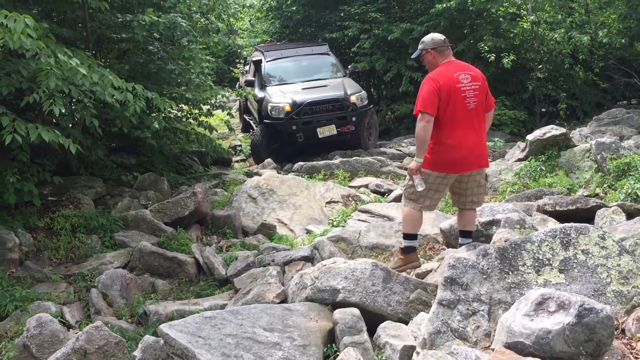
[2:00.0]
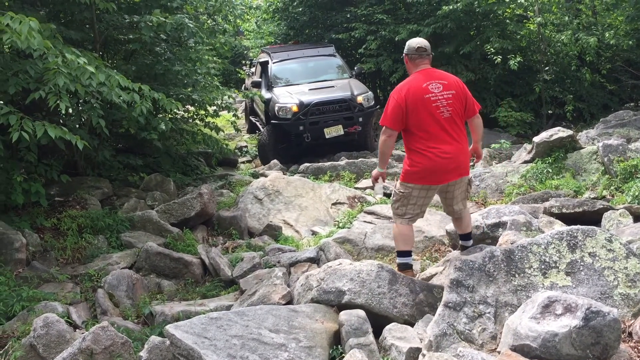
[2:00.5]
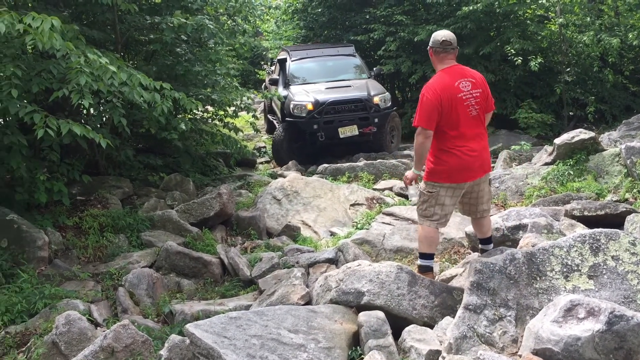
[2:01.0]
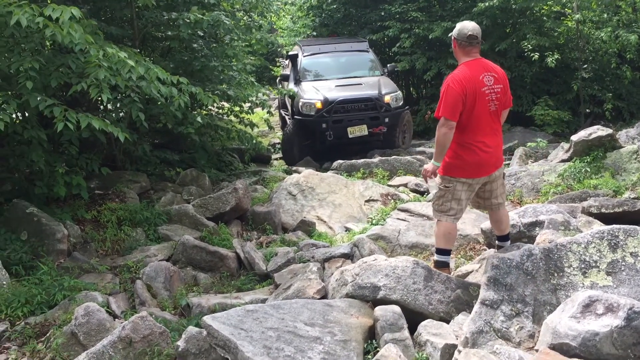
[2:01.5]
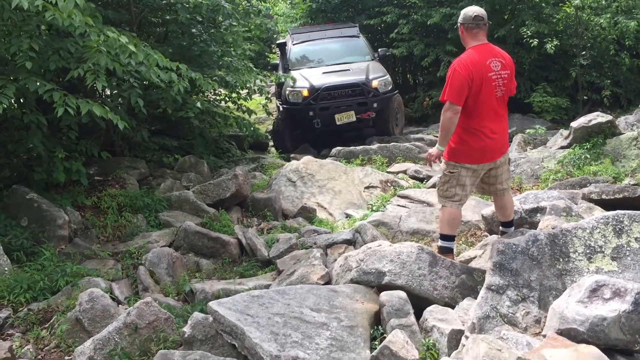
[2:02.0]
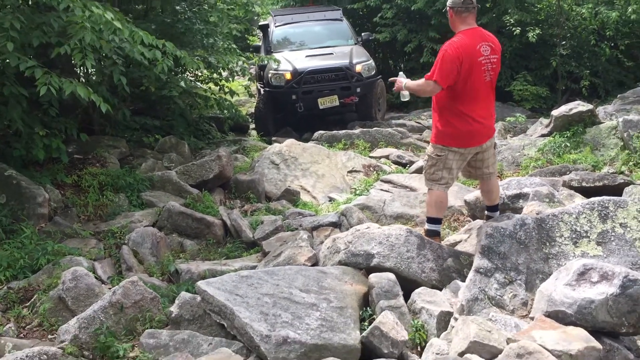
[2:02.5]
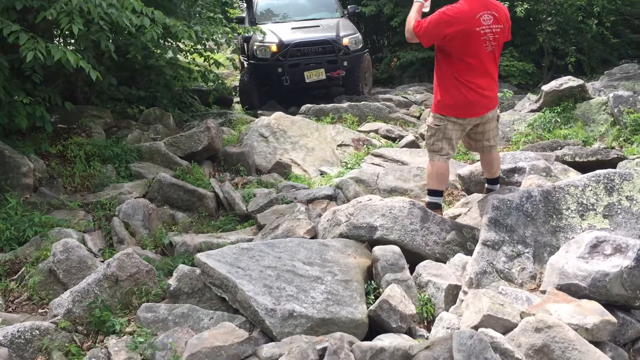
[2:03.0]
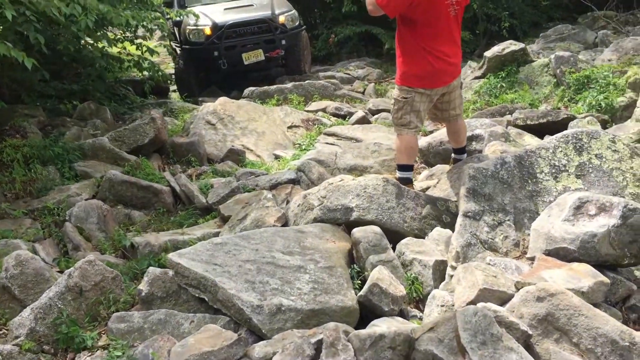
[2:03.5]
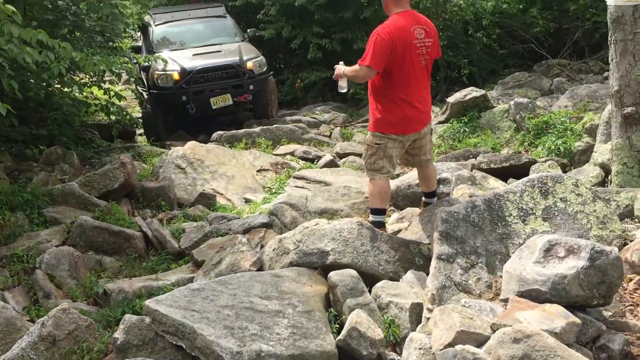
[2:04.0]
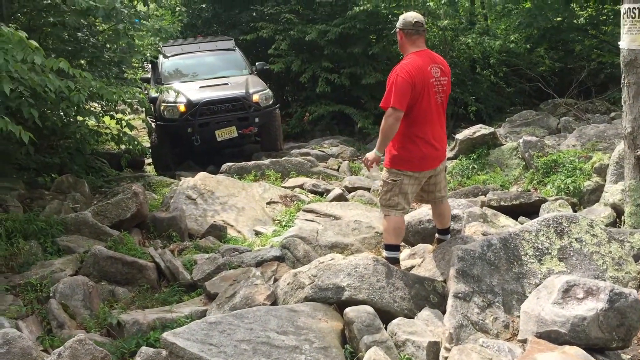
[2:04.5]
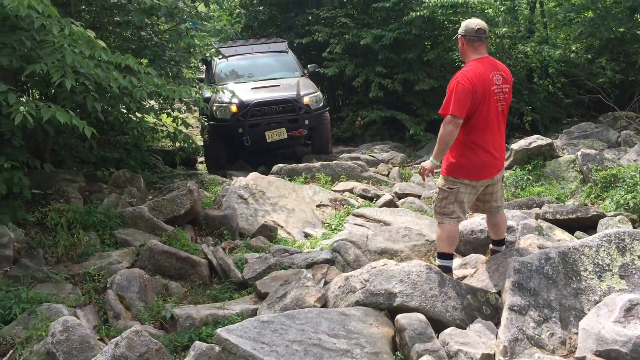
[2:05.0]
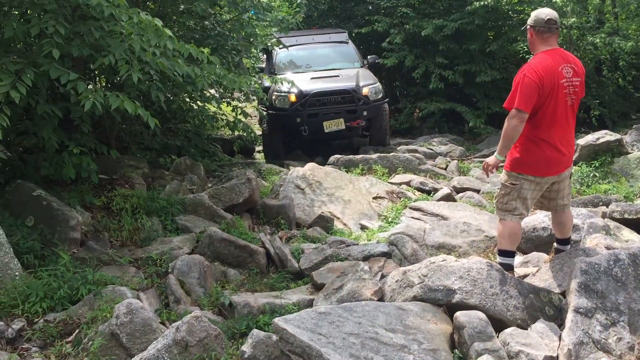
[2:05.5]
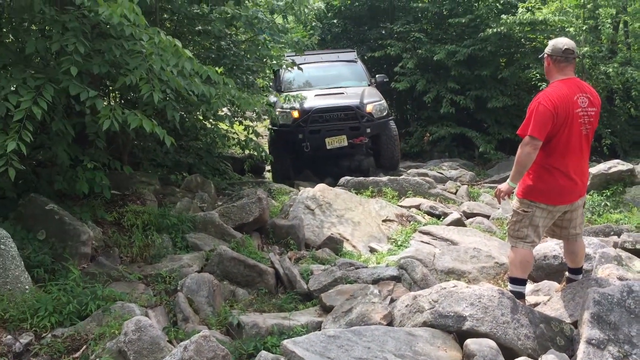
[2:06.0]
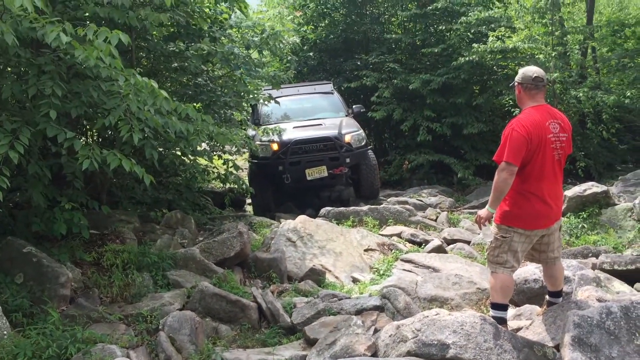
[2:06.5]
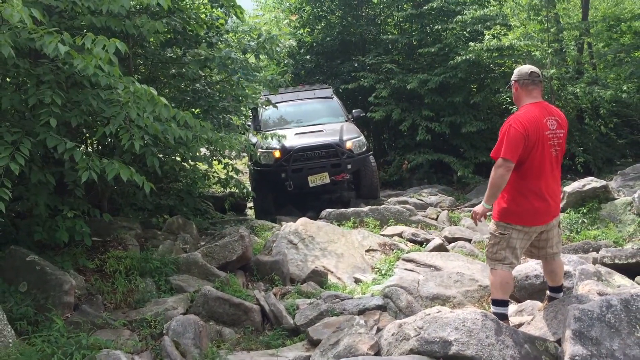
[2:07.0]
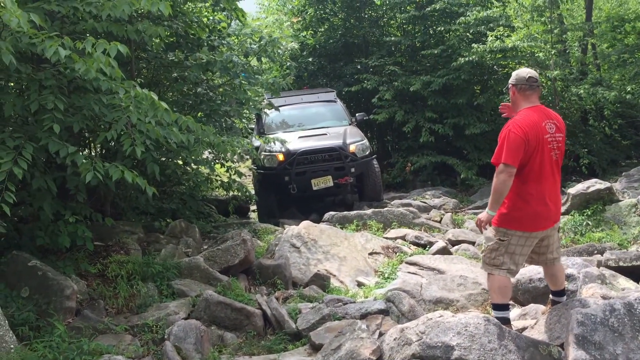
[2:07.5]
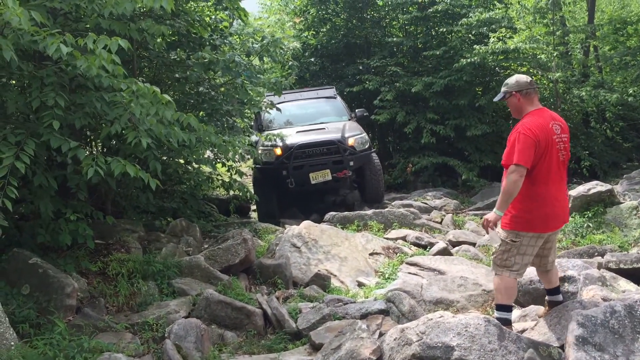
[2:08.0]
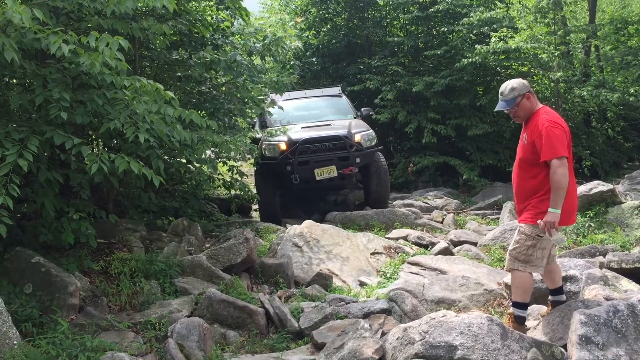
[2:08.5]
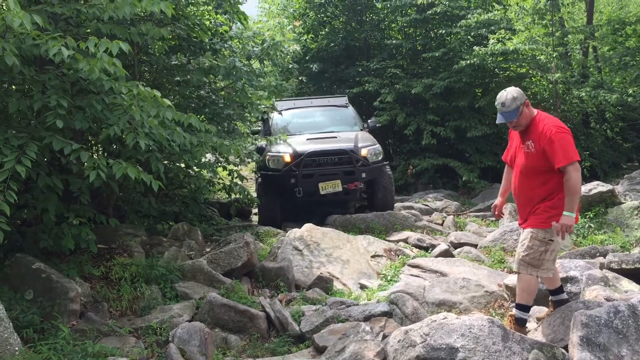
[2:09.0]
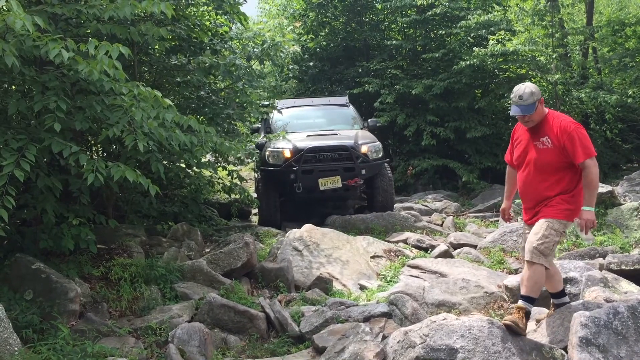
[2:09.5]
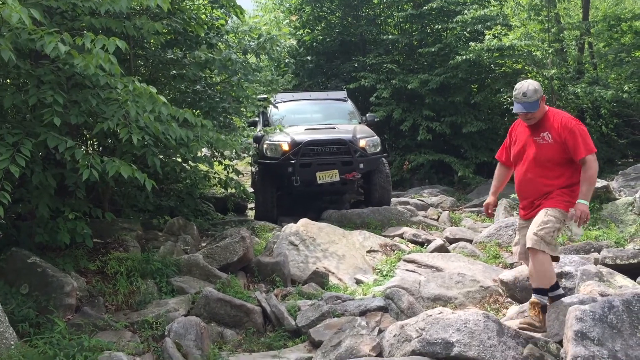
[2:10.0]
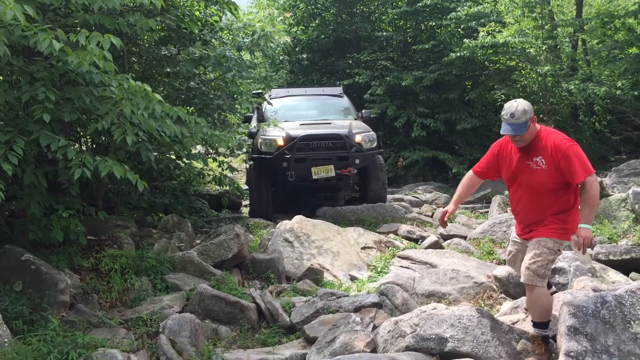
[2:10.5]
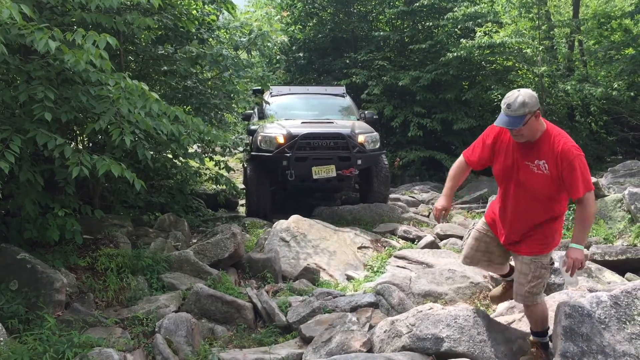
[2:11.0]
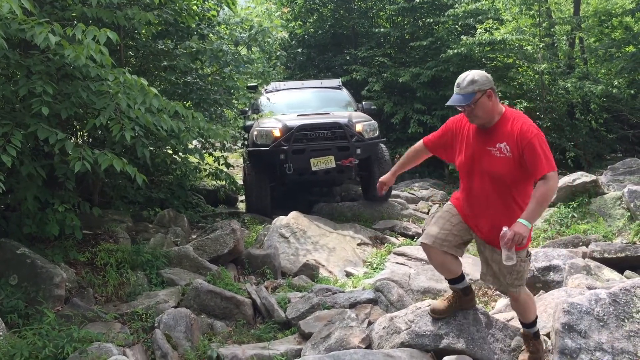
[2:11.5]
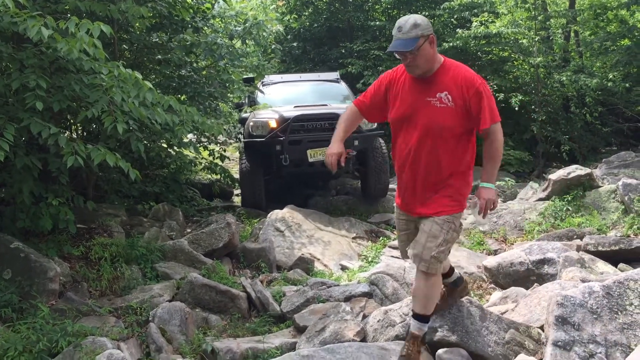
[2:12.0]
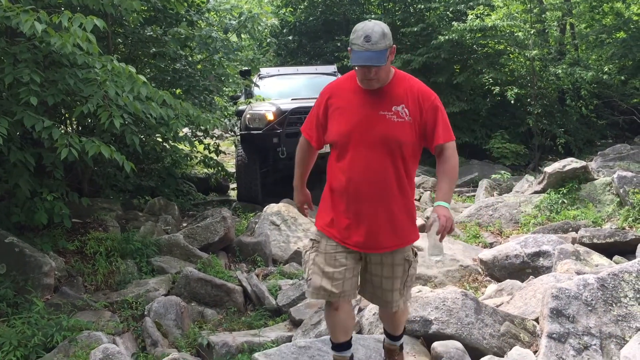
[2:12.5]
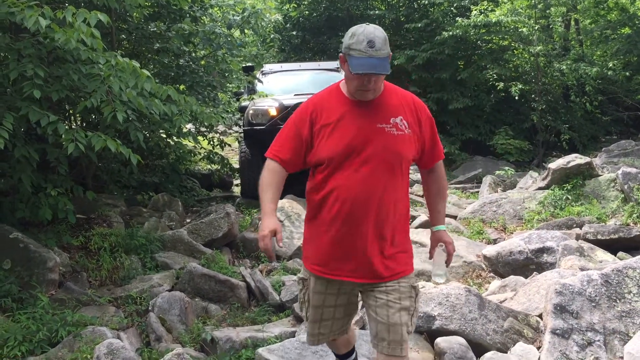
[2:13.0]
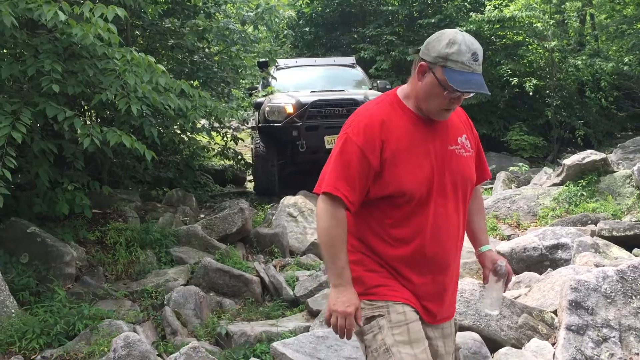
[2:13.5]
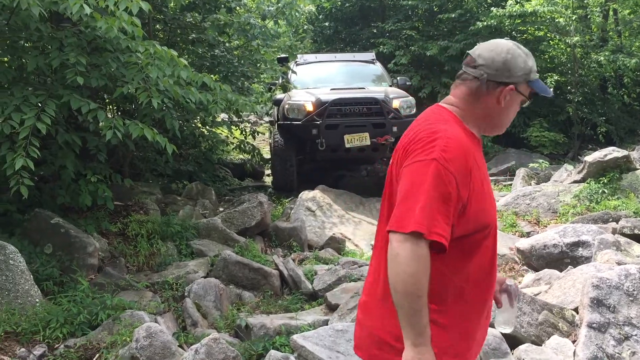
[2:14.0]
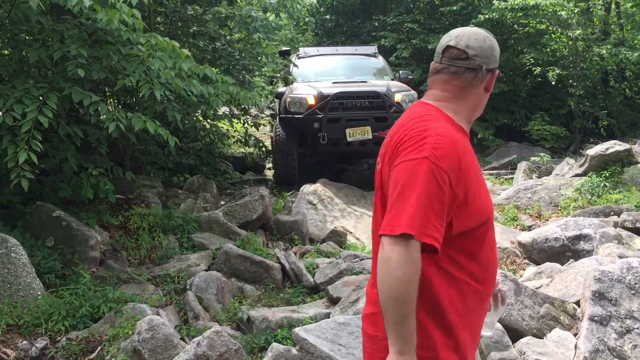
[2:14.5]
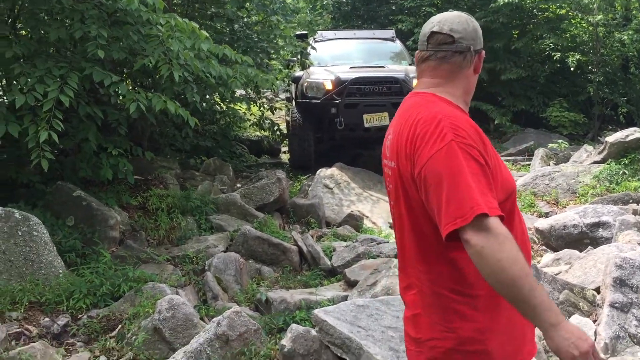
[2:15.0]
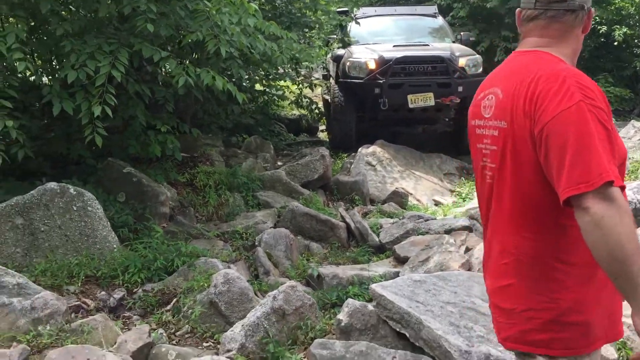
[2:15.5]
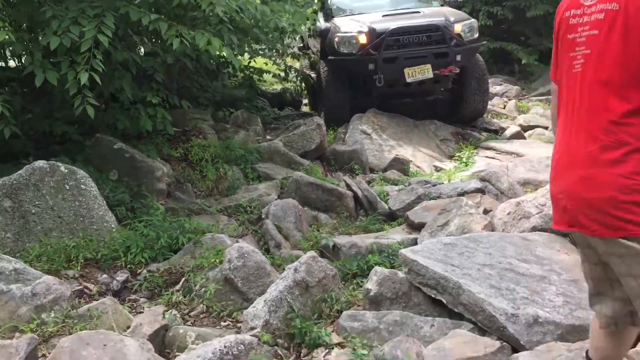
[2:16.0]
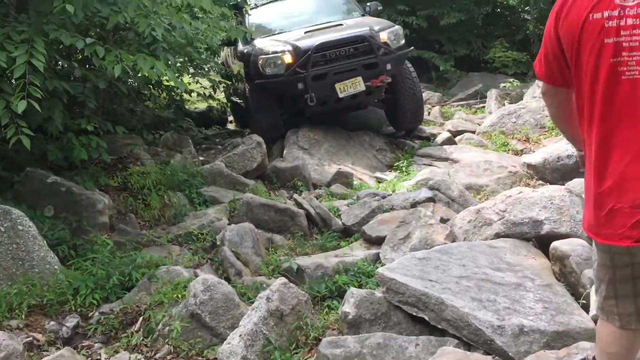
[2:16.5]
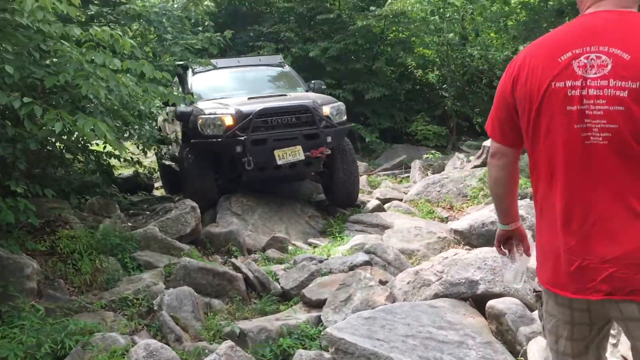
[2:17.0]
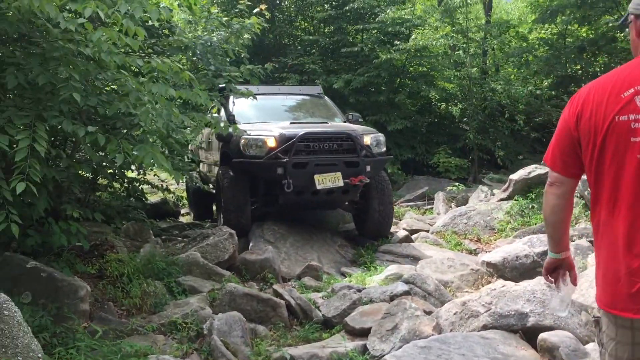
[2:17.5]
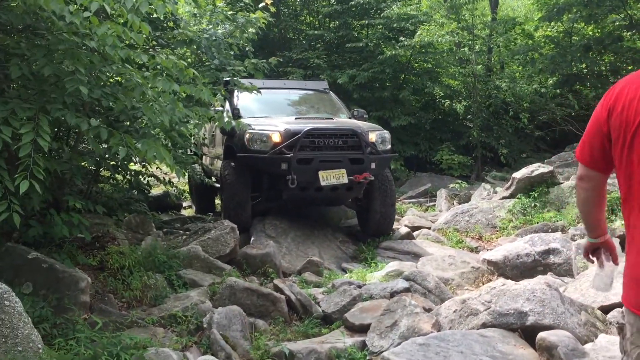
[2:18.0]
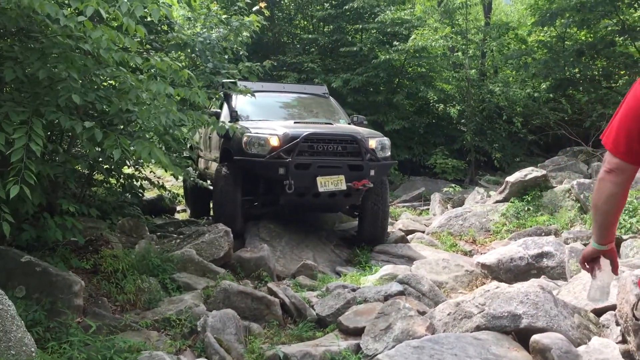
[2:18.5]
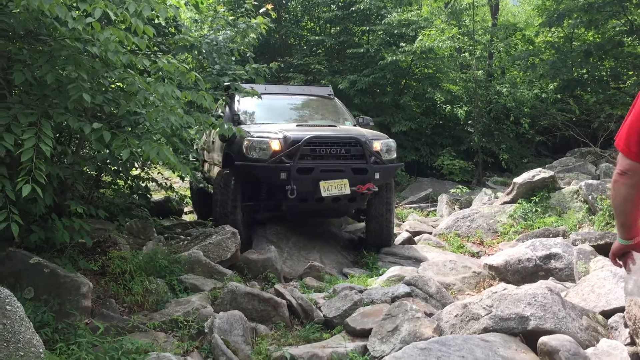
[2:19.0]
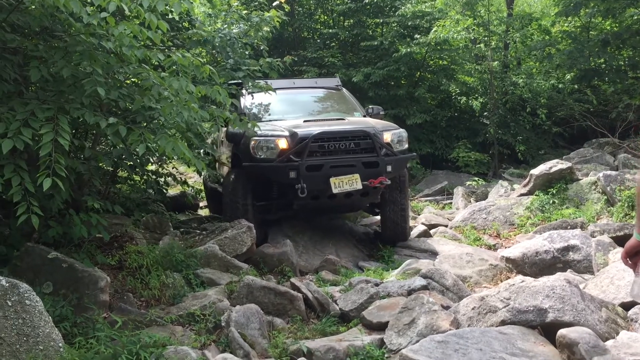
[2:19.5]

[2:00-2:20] The man in the red shirt is still just right of center. His left foot has a brown shoe on. He holds a bottle of water in his left hand straight down at his side, wears some sort of green bracelet on that wrist, and has sunglasses on. The truck's wheels are cut sharply to the left, facing forward toward the camera, deeper into the picture. The man steps slightly to the left, legs spread, and motions to the driver, putting his hands out to the side with his fingers up, kind of indicating the distance he has to go. The camera moves slightly to the left as the truck tries to navigate the rocks. The man in the red shirt motions toward the truck, then turns around and looks down where he is stepping, steps up on a rock and off it, and ends up right in front of the camera on the right side, with the top of his head cut off at the top of the frame. Only his red shirt is visible, his chest facing to the right. The truck is just over his shoulder on the left side, coming toward the camera. The camera moves a little to the left to get away from him, and he is almost off screen. The truck slowly navigates with its wheels turned hard to the left as it comes toward the camera. The camera shakes a little. Only the man's arm and the bottled water remain visible.